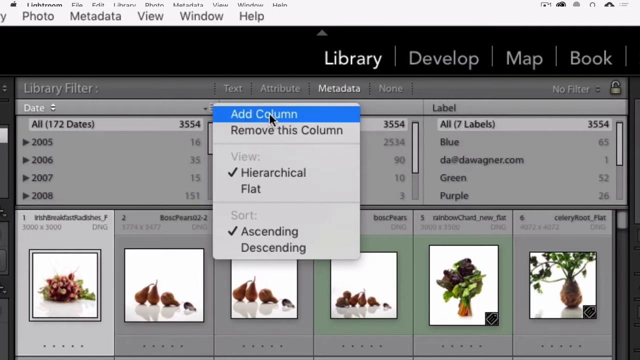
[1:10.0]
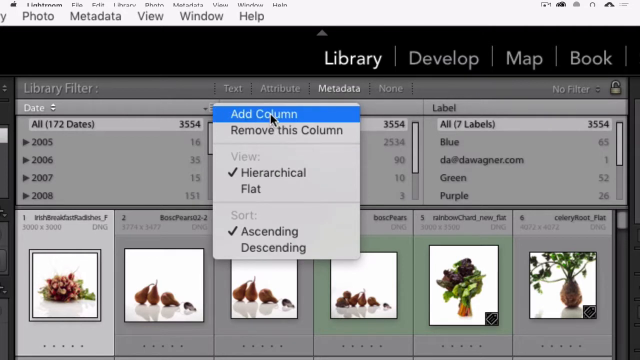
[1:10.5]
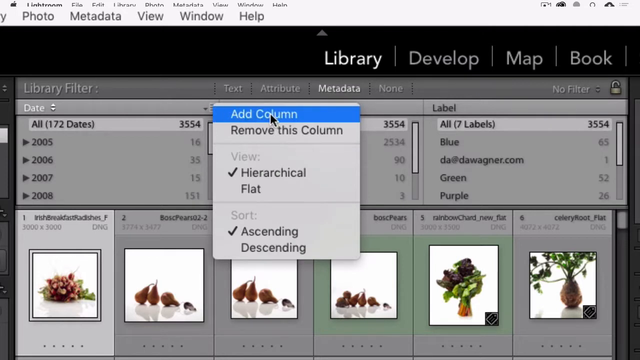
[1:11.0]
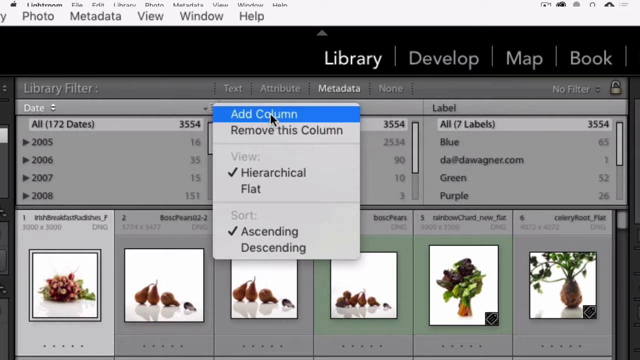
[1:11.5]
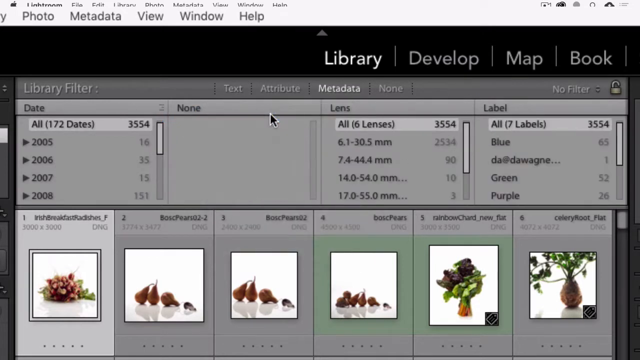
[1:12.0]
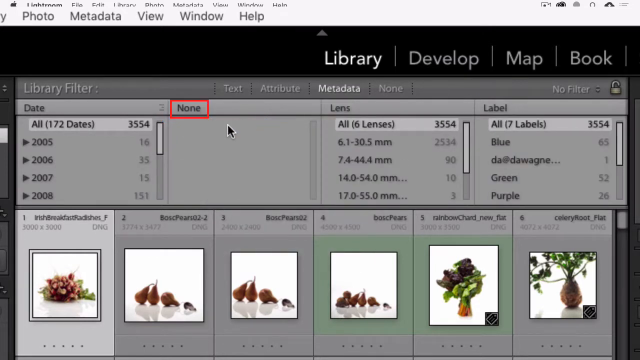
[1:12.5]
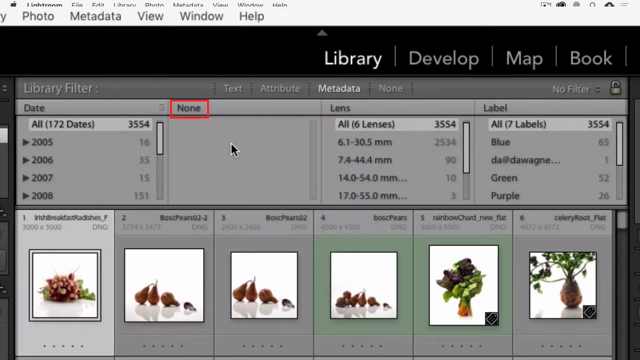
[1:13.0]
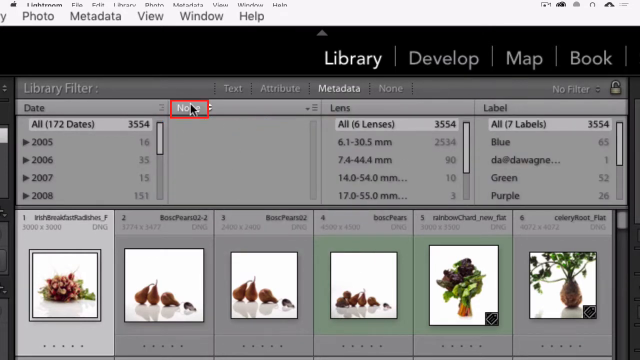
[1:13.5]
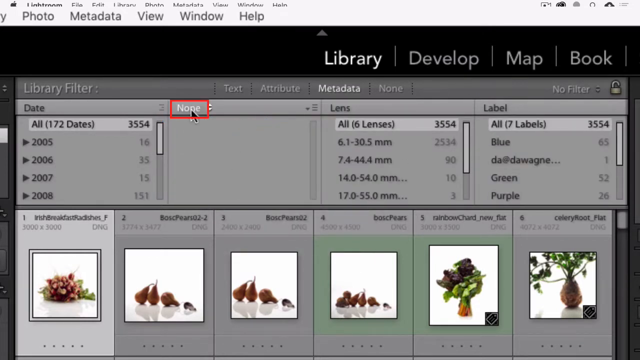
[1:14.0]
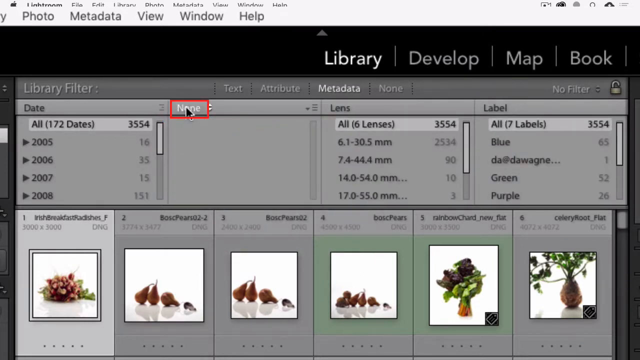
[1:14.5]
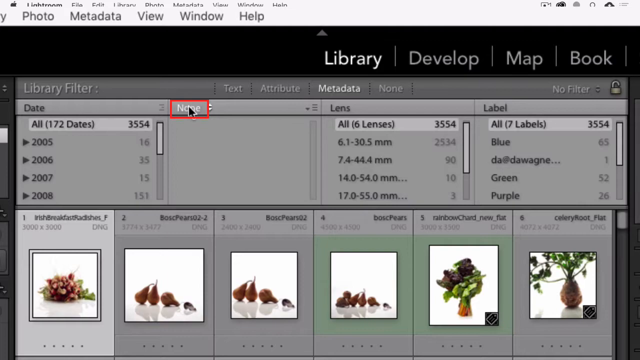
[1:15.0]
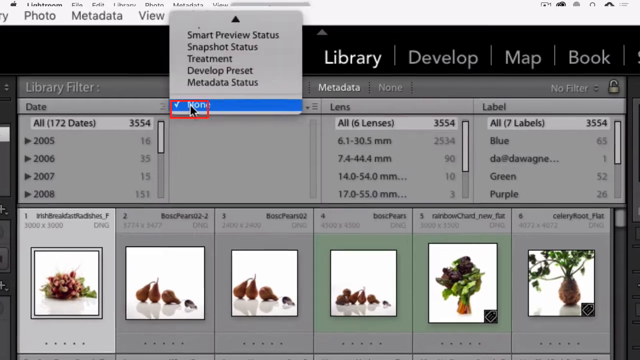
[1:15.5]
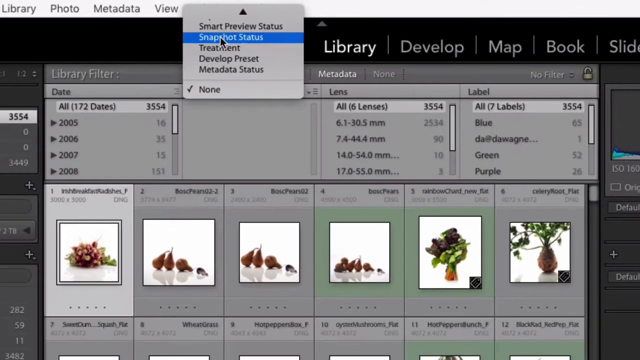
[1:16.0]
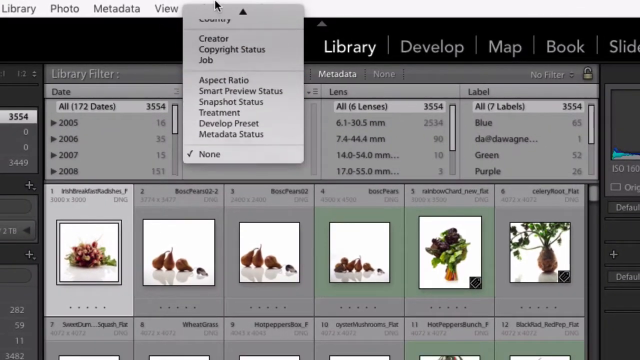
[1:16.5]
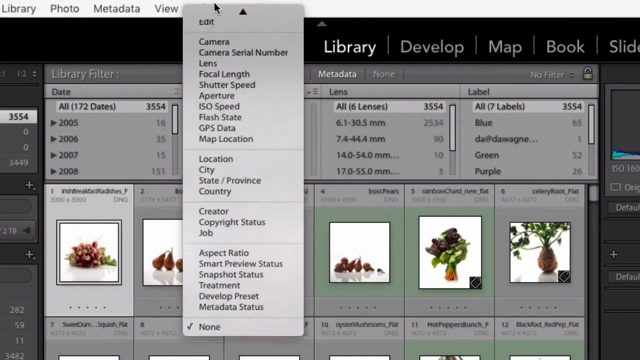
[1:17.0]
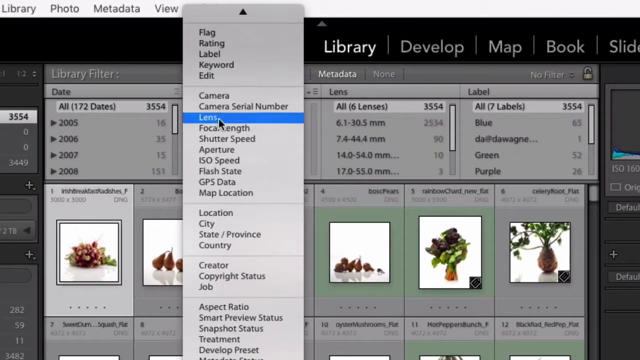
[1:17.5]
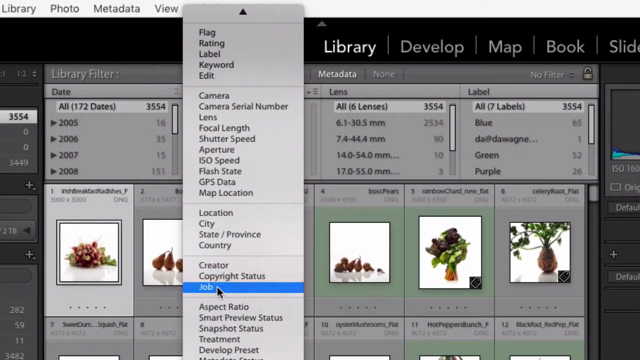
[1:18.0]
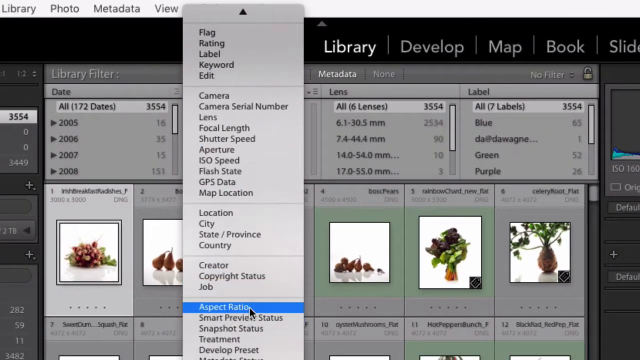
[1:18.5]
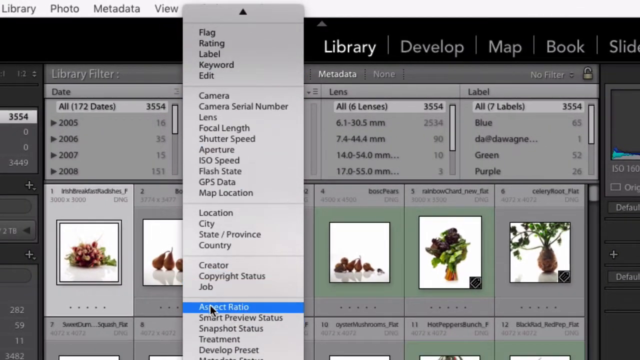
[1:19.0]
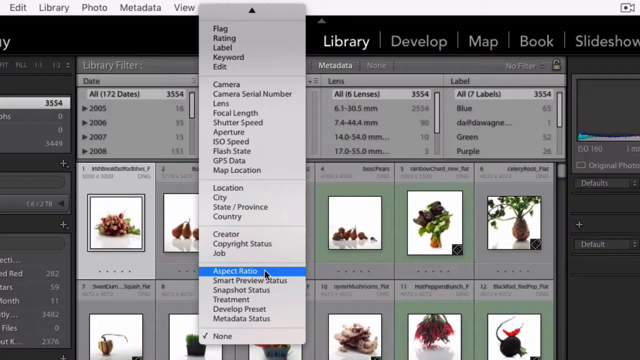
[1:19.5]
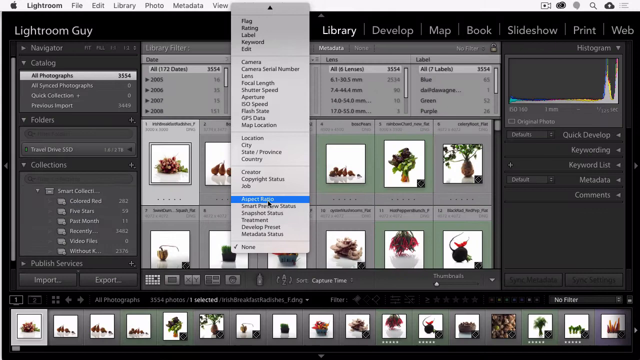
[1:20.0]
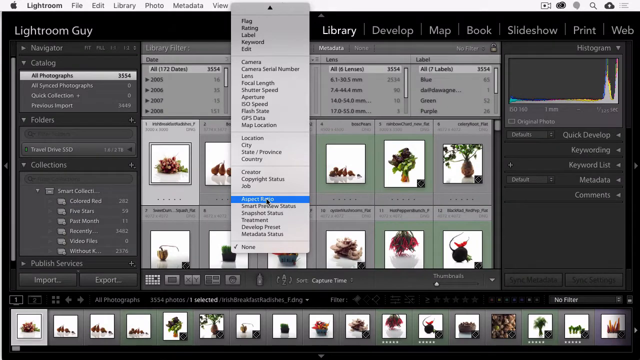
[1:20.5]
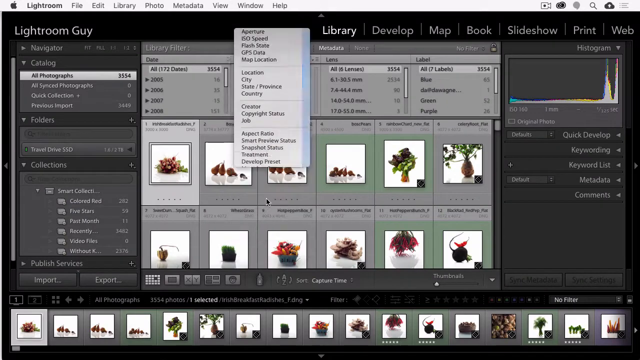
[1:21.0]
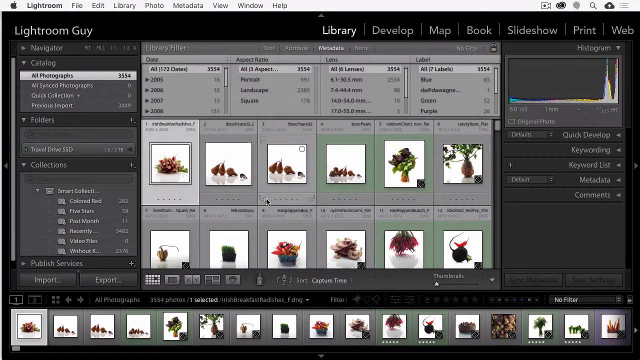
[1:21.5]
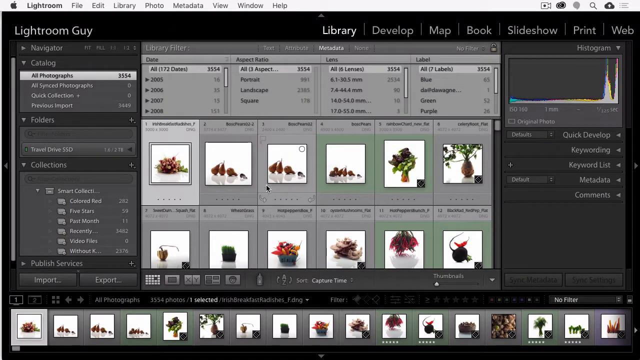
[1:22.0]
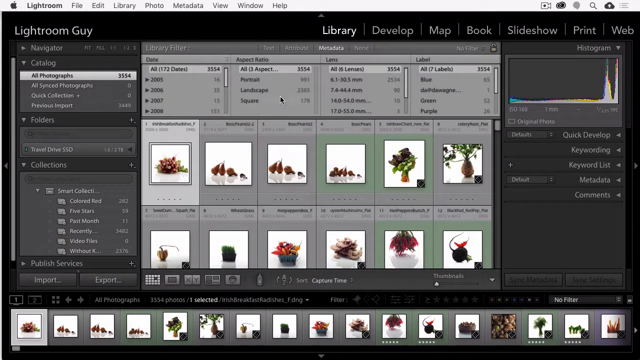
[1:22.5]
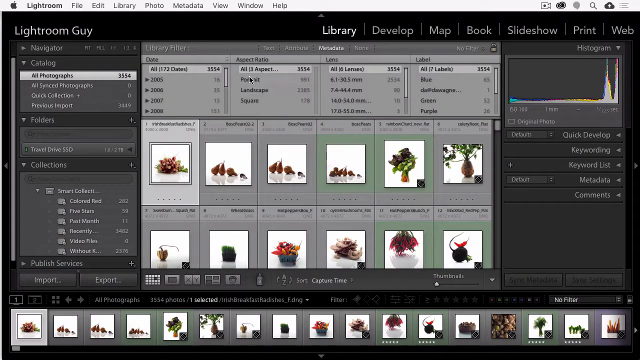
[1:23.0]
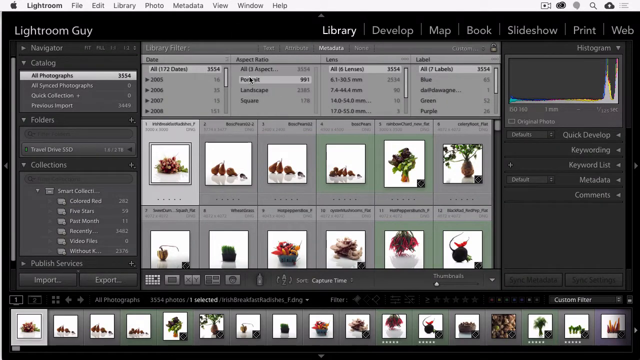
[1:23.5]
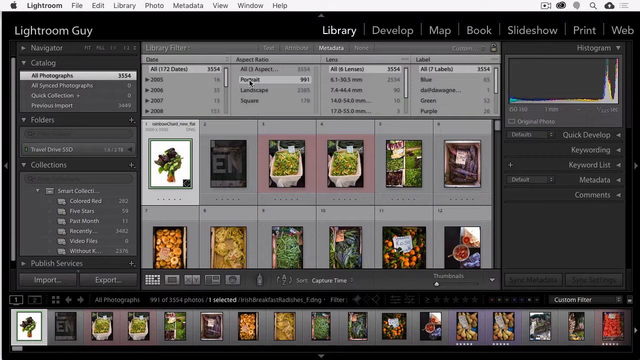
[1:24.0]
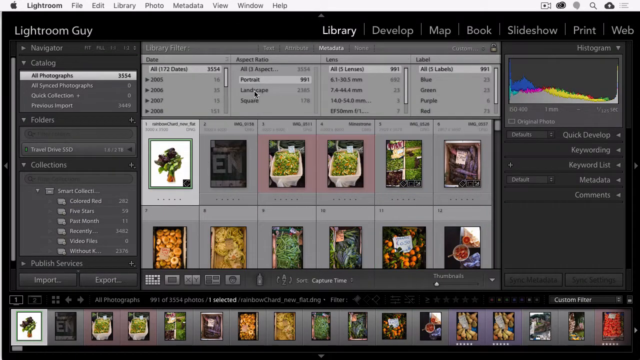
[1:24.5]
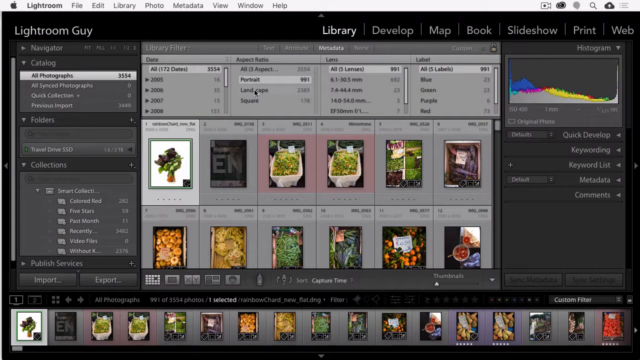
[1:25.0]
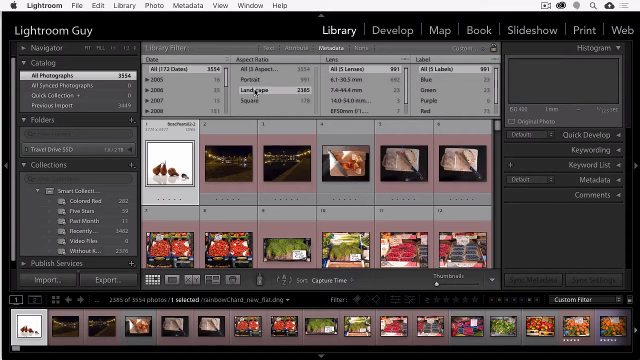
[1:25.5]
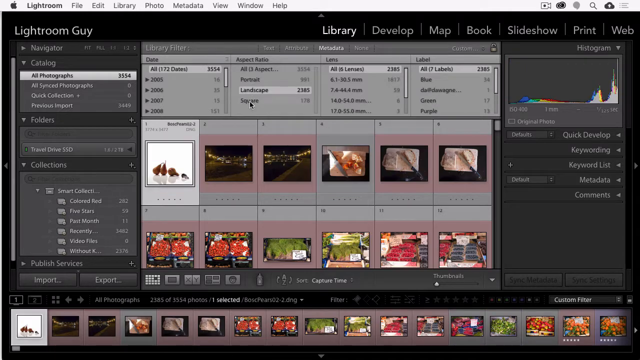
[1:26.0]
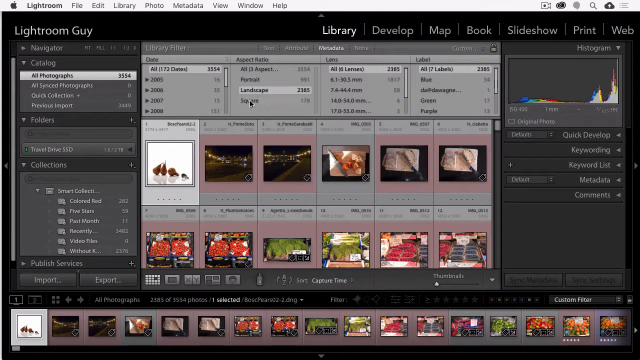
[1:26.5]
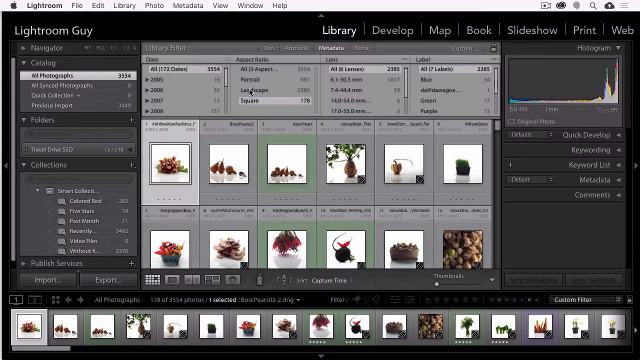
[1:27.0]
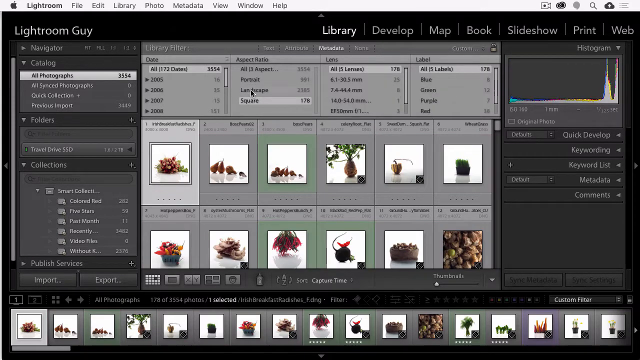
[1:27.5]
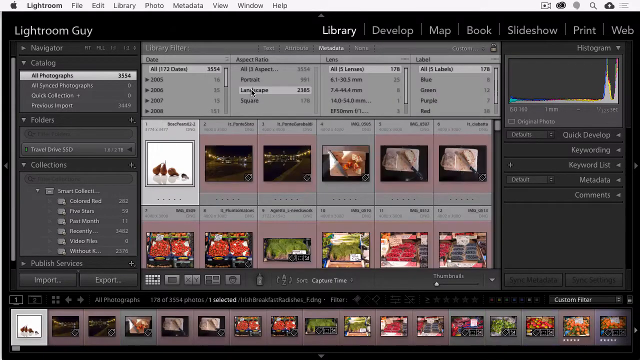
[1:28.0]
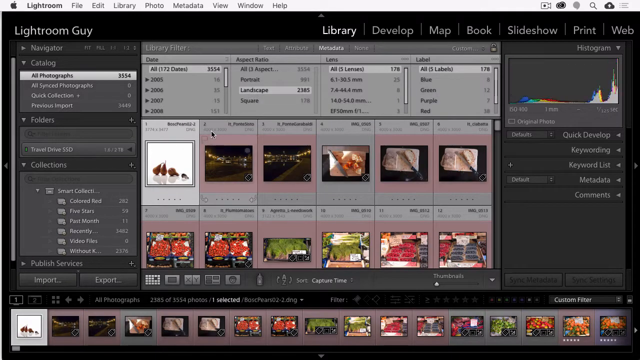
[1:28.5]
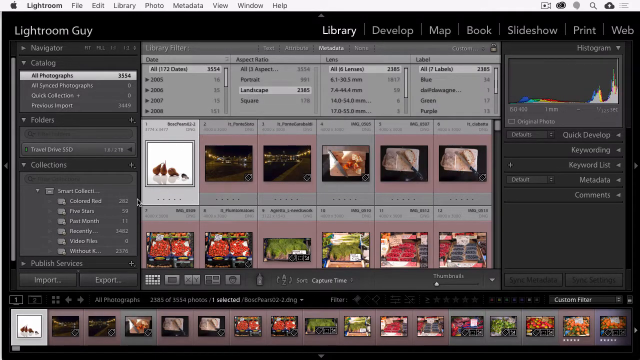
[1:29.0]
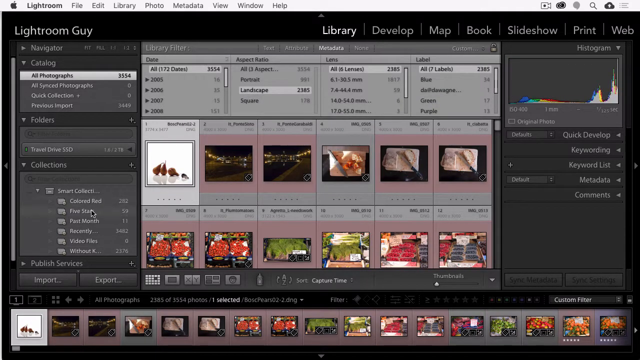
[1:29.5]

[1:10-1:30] When the user clicks the red square, options appear: Add Column, Remove Column, View and Sort. The user clicks Add Column, and a new column is added between the Date and Lens columns. Where the column name should be, it reads "none", with a red border around it. Clicking "none" brings up different options, and Aspect Ratio turns blue as the user clicks it. The view then zooms out.